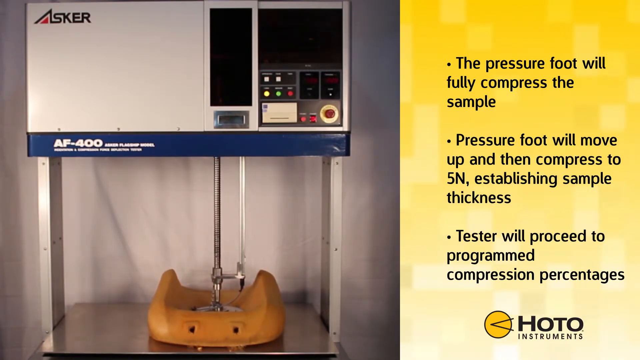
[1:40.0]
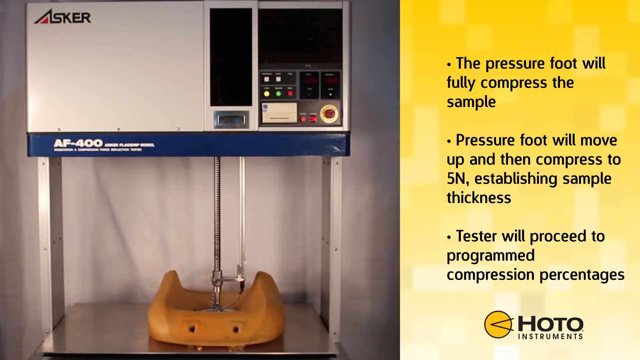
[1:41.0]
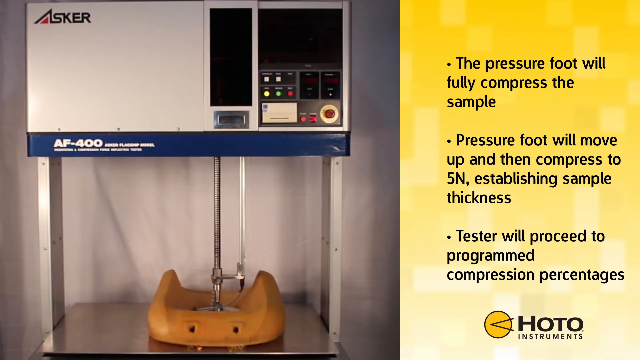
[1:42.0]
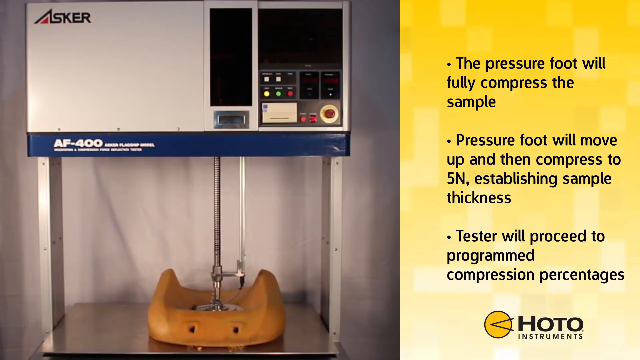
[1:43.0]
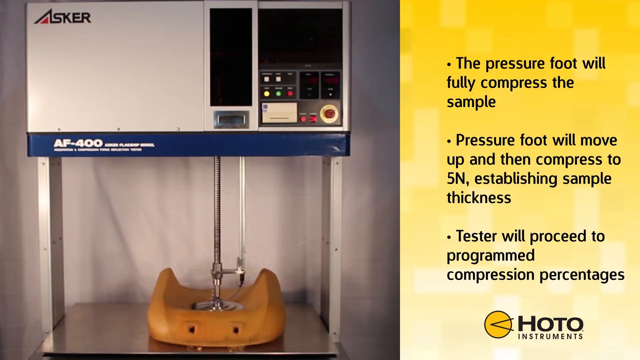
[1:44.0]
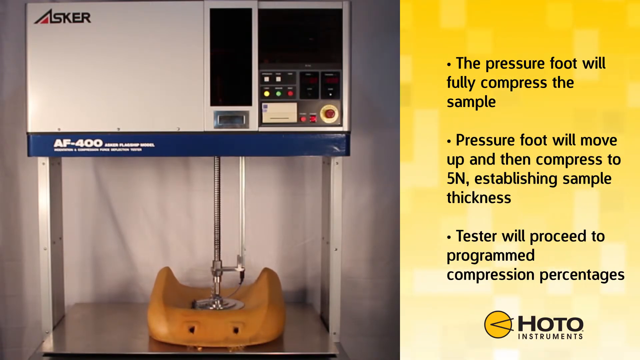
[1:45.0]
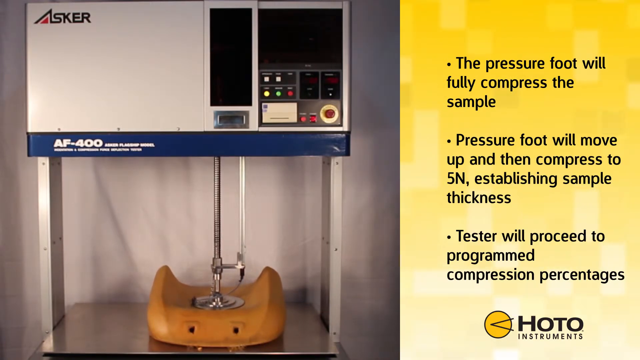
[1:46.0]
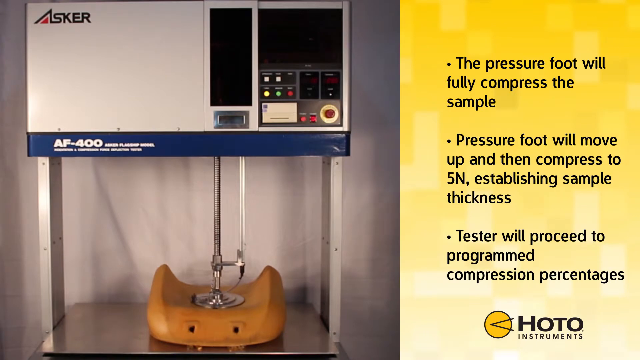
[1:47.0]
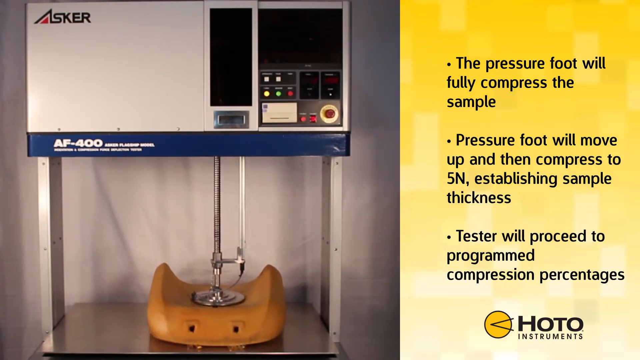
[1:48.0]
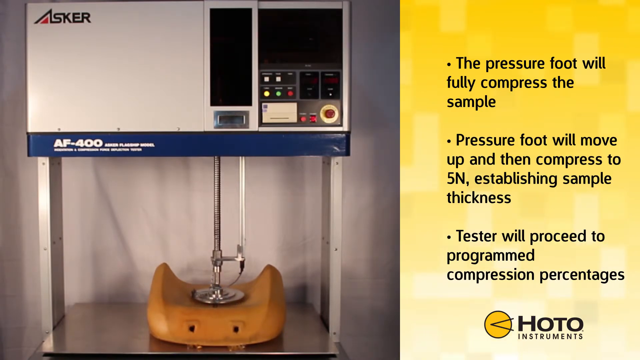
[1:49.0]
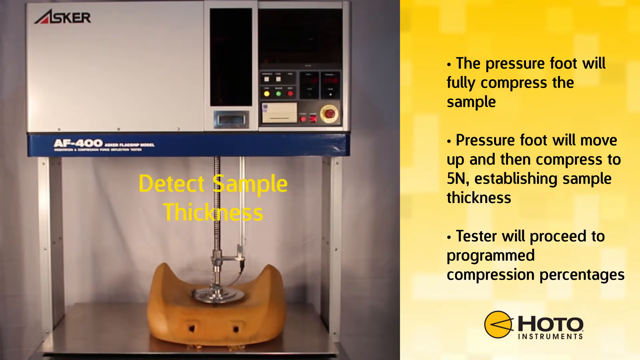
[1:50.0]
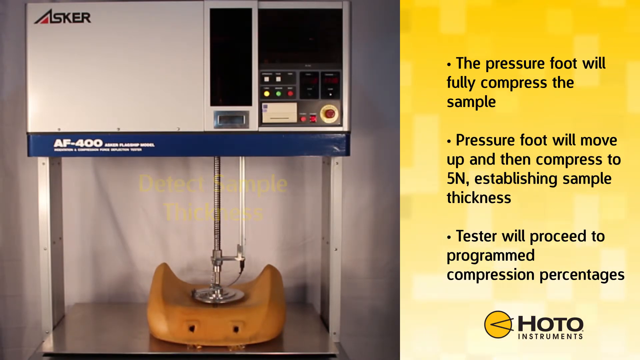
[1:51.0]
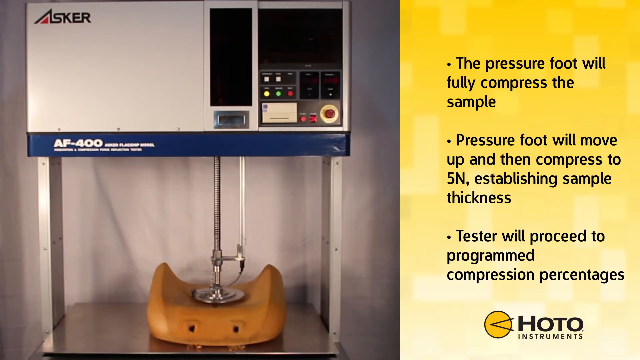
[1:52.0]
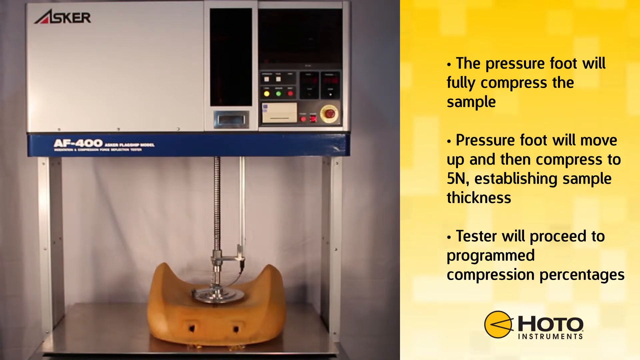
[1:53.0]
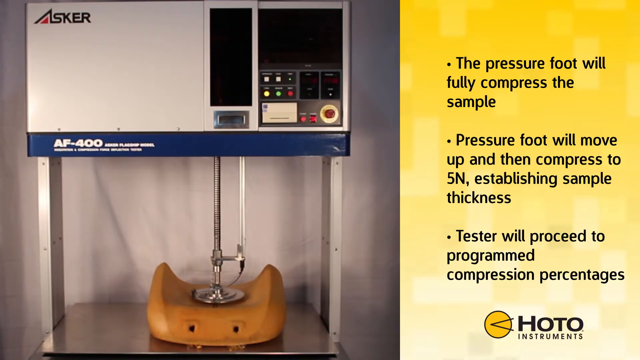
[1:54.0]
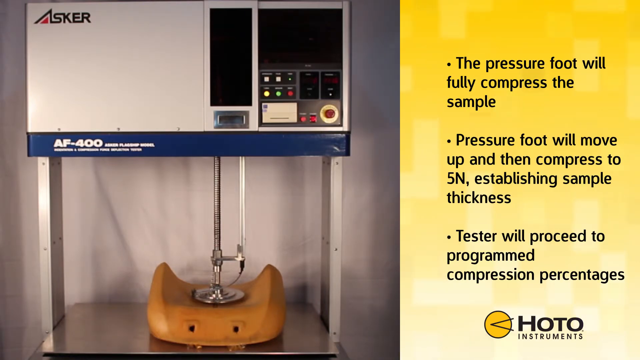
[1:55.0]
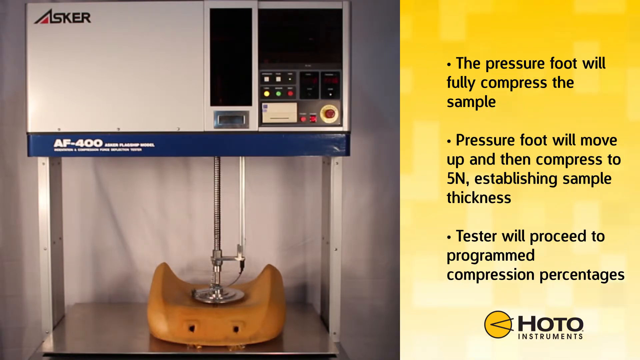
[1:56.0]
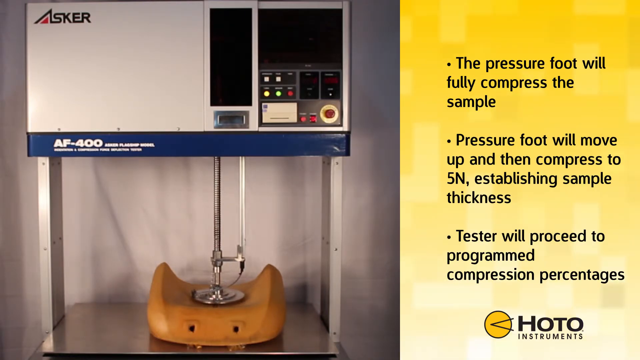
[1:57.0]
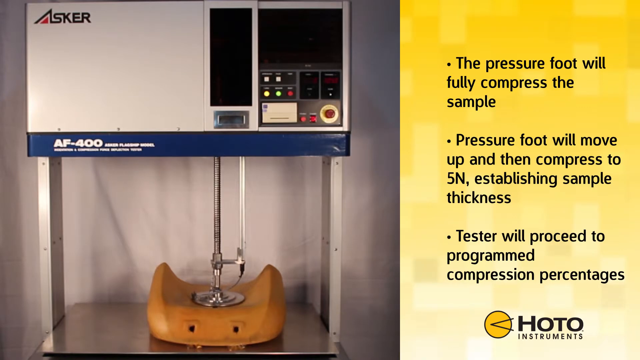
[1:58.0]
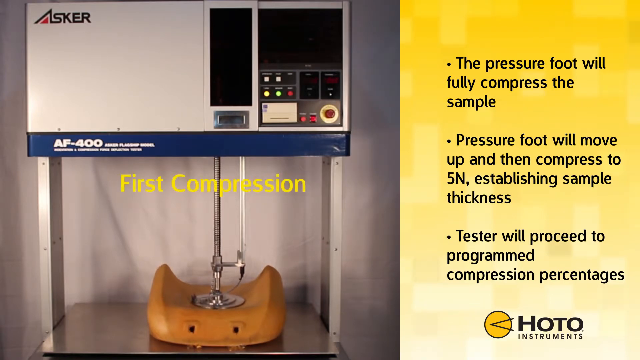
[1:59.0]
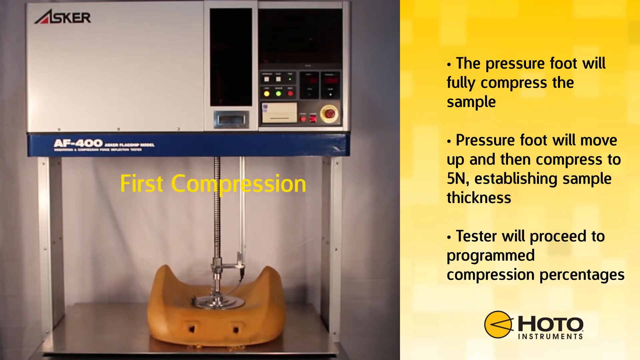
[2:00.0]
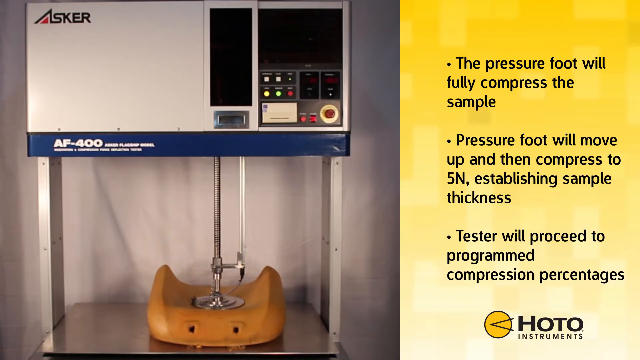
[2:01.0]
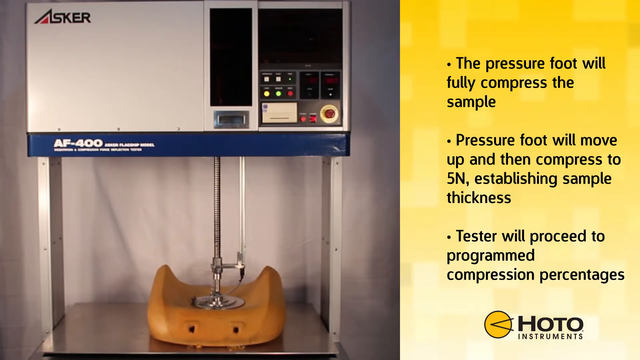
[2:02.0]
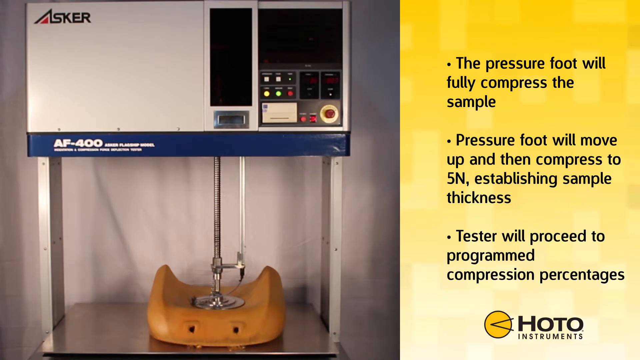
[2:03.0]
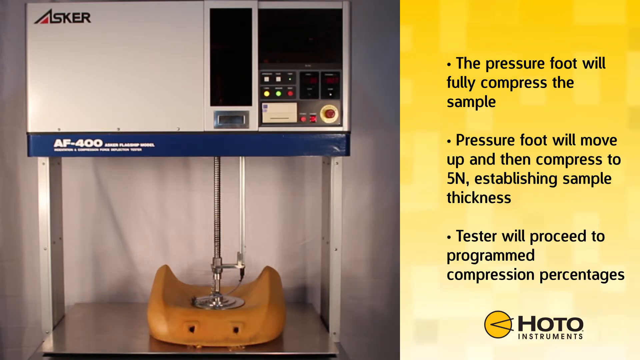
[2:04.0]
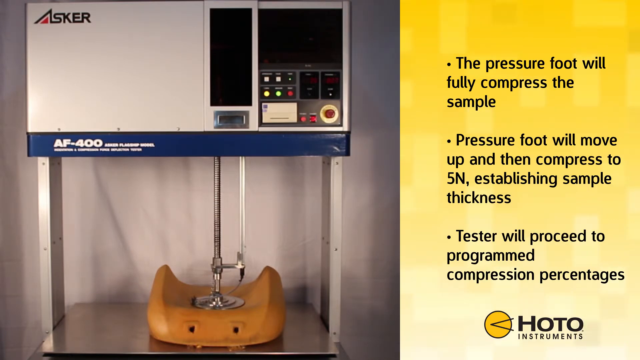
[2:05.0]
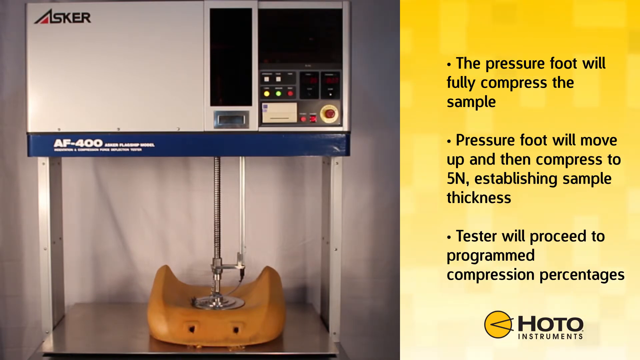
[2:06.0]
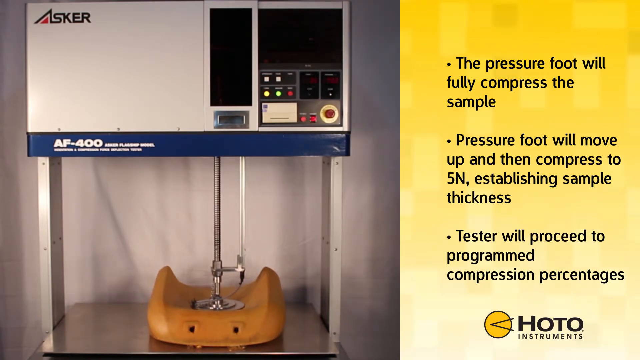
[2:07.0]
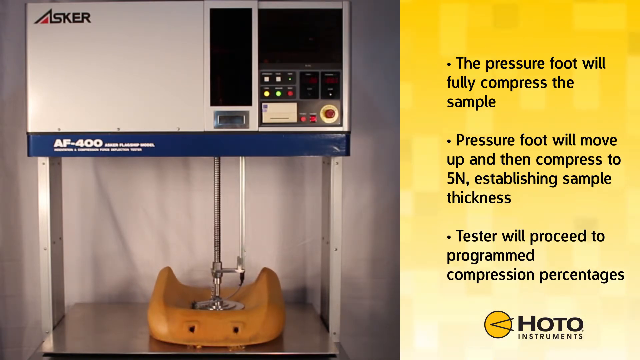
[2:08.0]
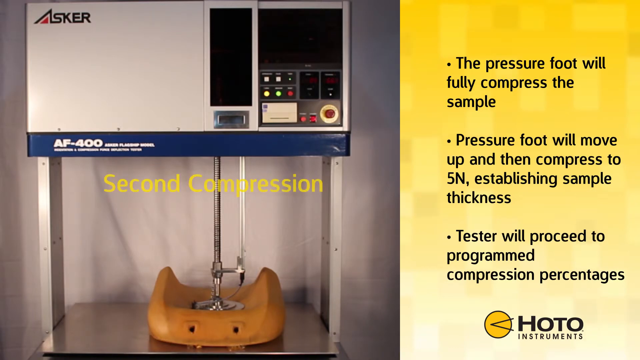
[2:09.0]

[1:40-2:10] The compression arm is fully compressed and slowly lifts up. An image says "detect sample thickness". On the right side are three bullet points: "pressure foot will fully compress the sample", "pressure foot will move up and then compress 5N to establishing sample thickness", and "tester will proceed to program compression percentages". The footage is very slow; the arm slowly pushes down, and "first compression" pops up on the screen. It slowly pushes down again, "second compression" appears, and the screen slightly blinks.